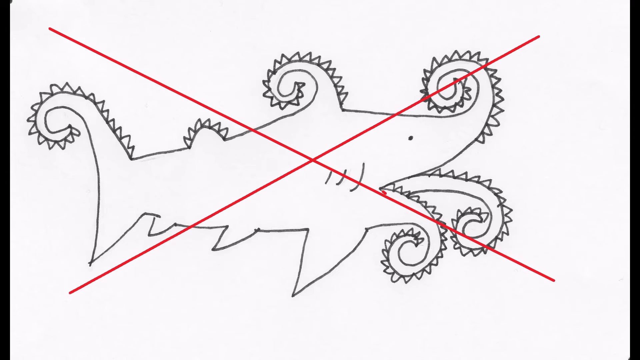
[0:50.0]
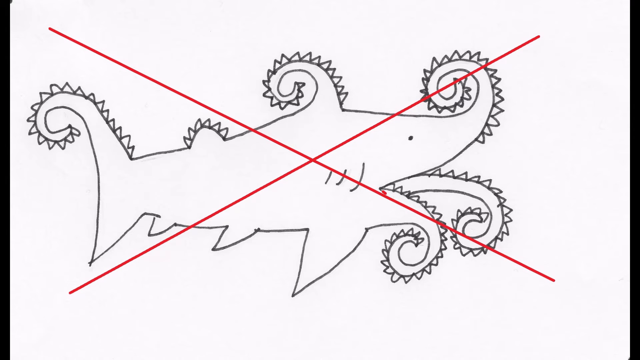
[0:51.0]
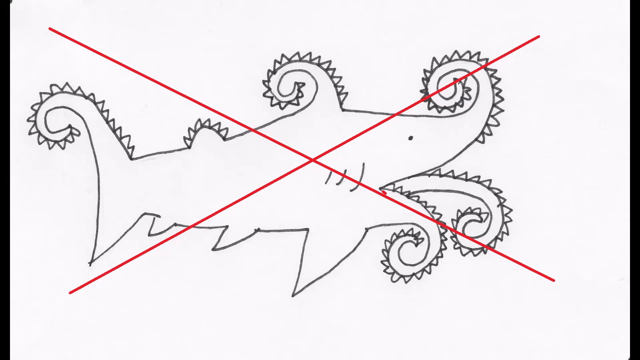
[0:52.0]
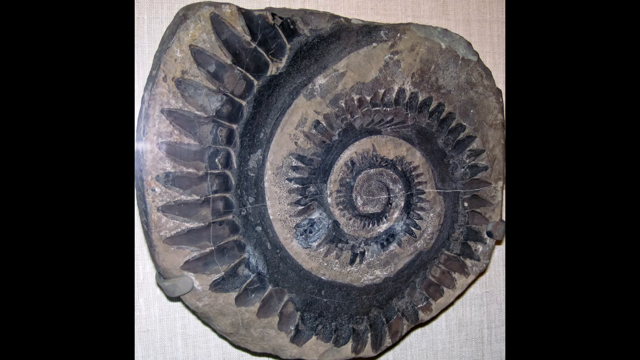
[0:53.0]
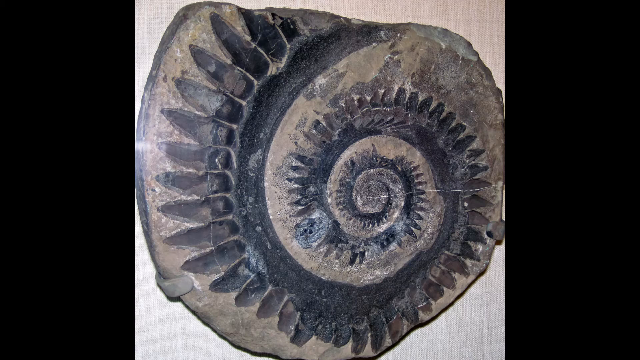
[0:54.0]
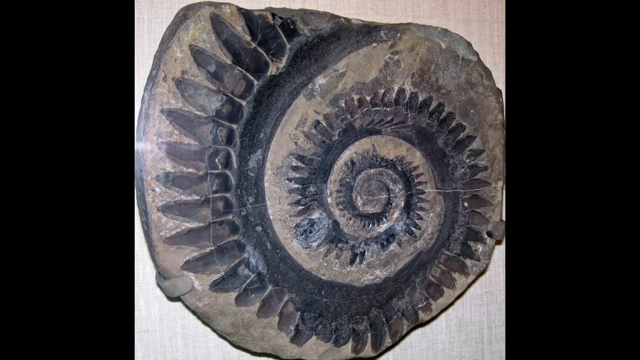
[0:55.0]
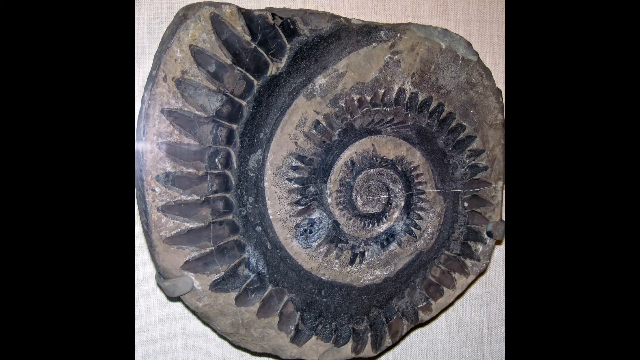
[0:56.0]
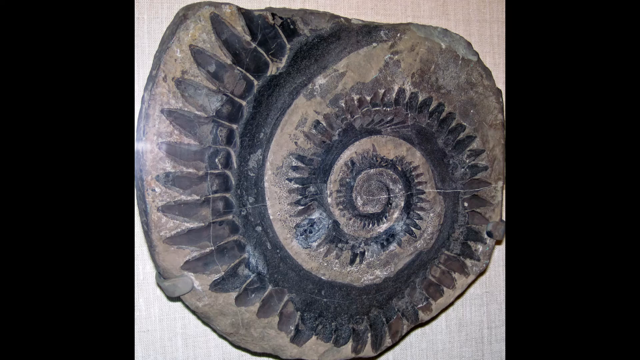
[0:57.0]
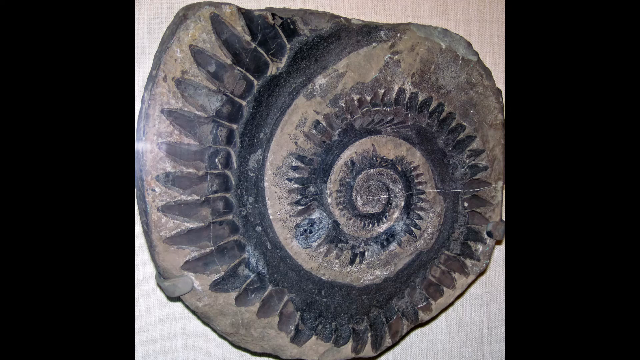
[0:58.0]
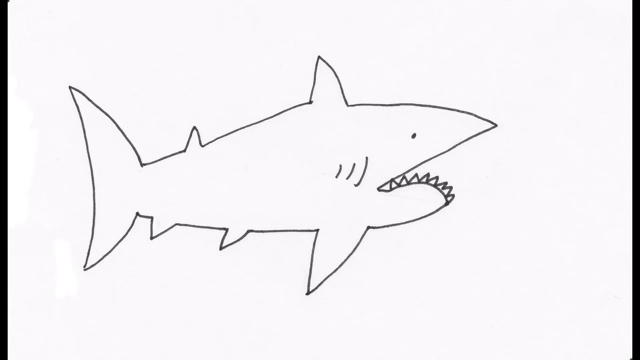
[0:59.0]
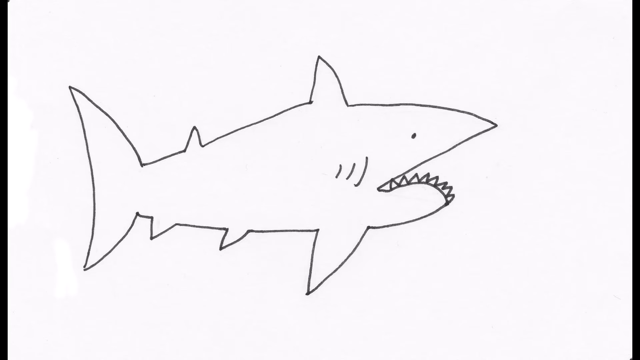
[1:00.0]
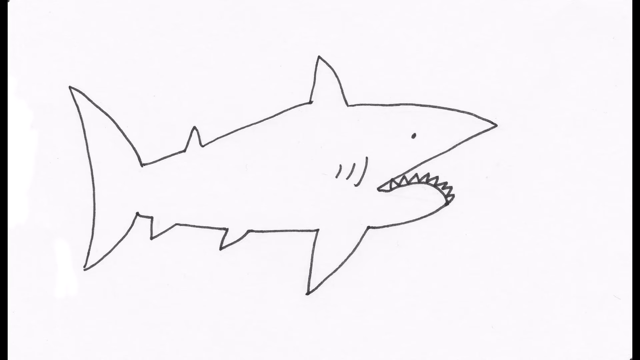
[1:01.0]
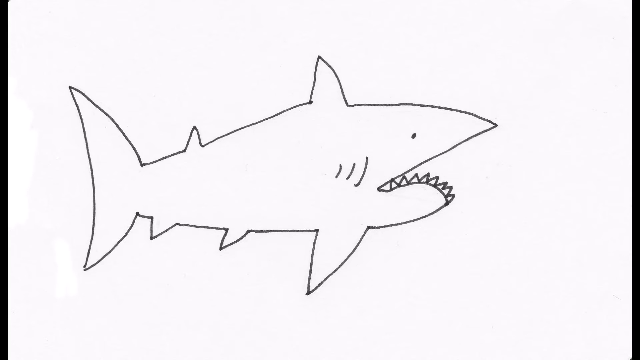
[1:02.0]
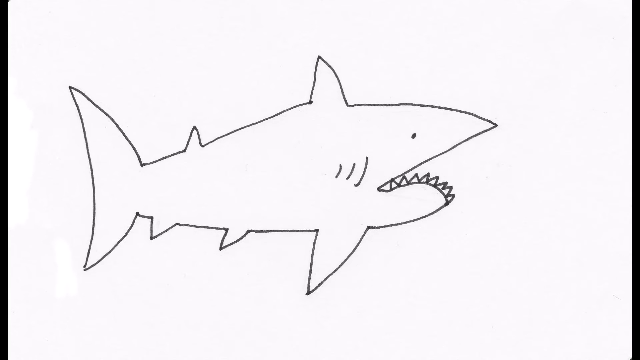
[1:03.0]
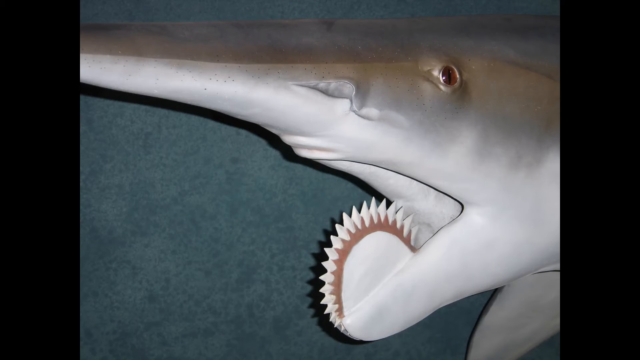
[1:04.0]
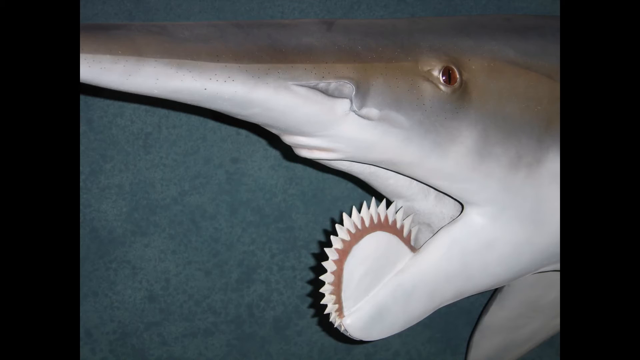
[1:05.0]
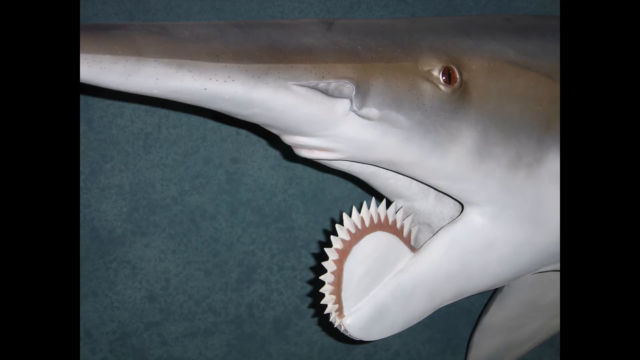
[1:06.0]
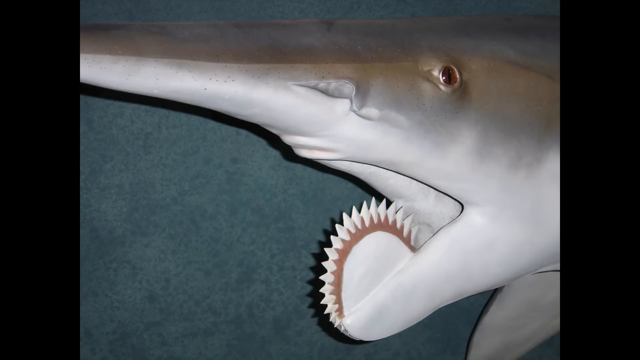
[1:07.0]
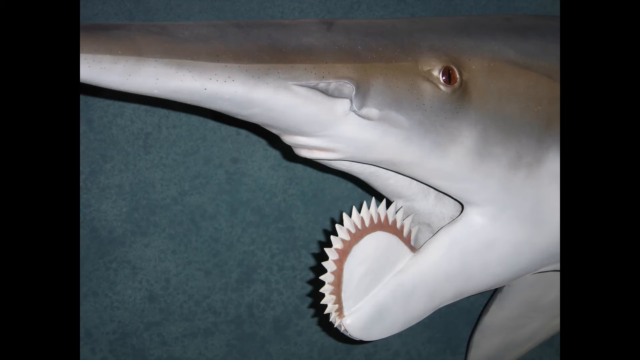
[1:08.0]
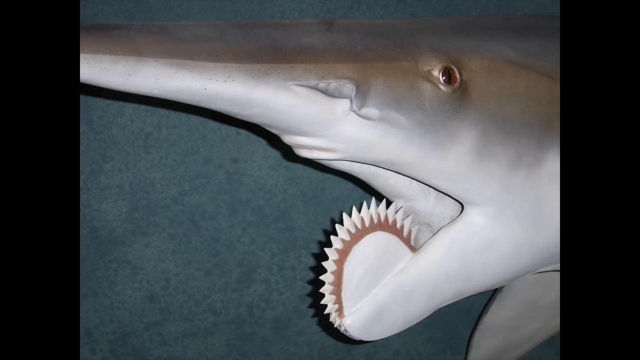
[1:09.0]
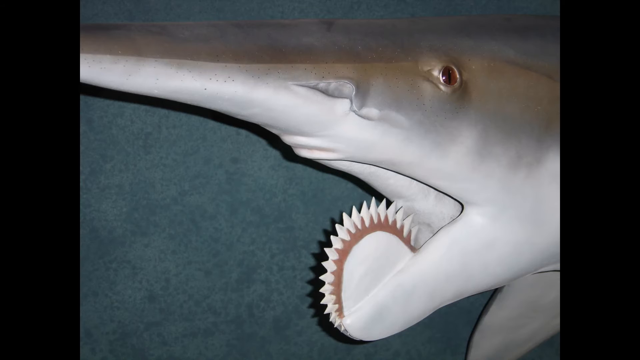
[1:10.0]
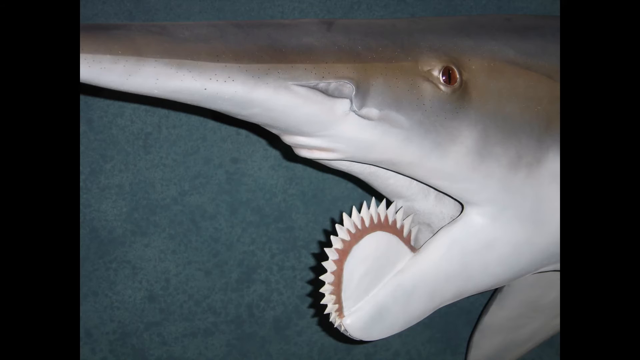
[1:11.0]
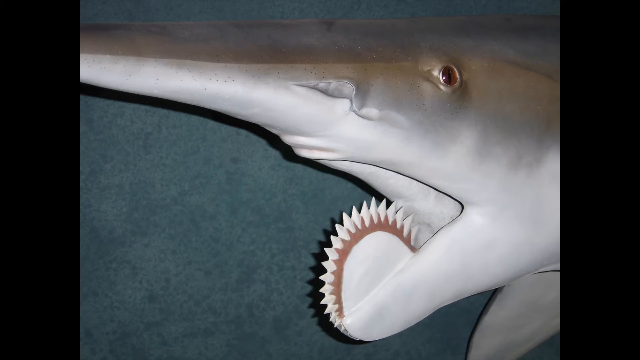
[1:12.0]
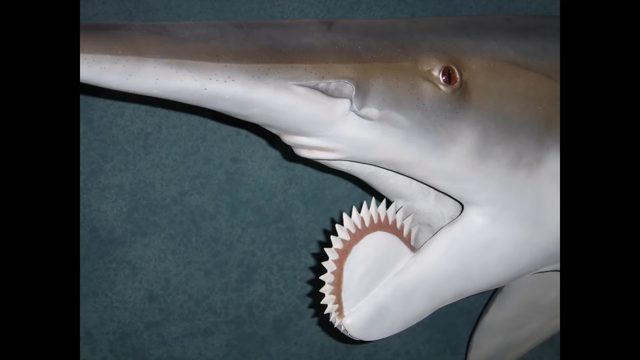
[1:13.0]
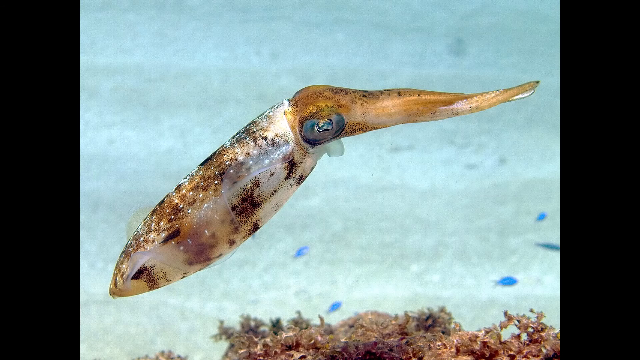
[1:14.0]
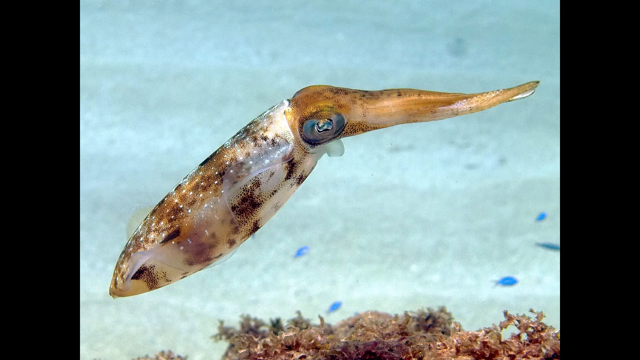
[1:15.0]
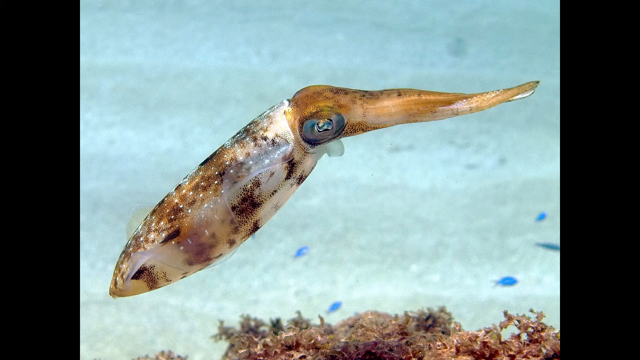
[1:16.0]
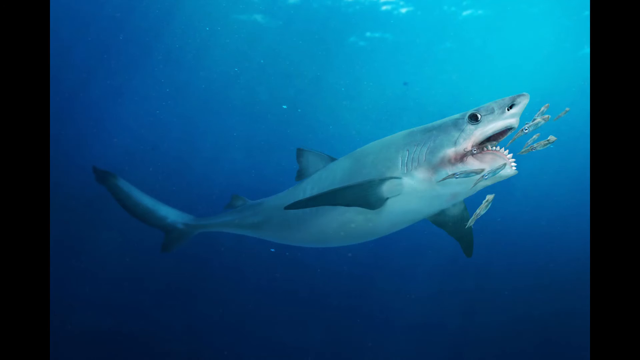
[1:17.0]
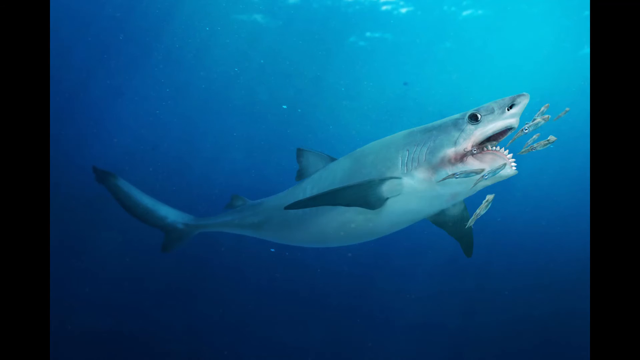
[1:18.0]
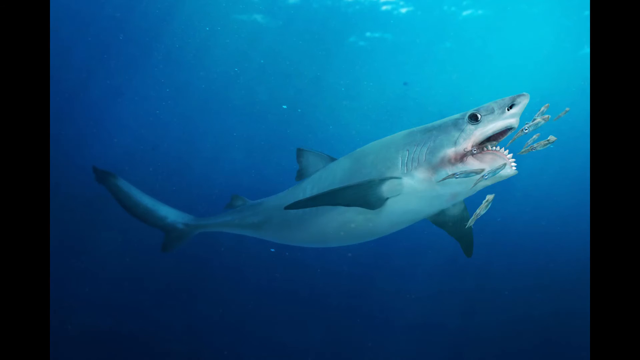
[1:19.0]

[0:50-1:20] The octopus with the X through it is shown, and then a fossil that looks like a snail. A shark appears again on a white screen as an outline, this time with its teeth drawn. Then it changes to a picture of what looks like a real shark, possibly stuffed or made by someone, on a blue background. The shark is gray, with a real-looking eyeball and a lot of teeth in its mouth. The view pans to another type of fish, brownish, on a light blue background, with tiny blue fish swimming around it. Then another shark is shown, this one actually in the ocean water.